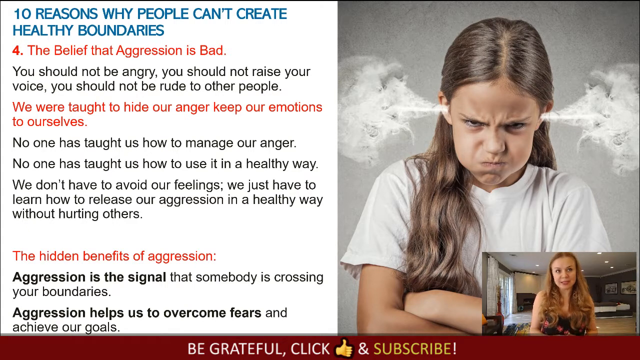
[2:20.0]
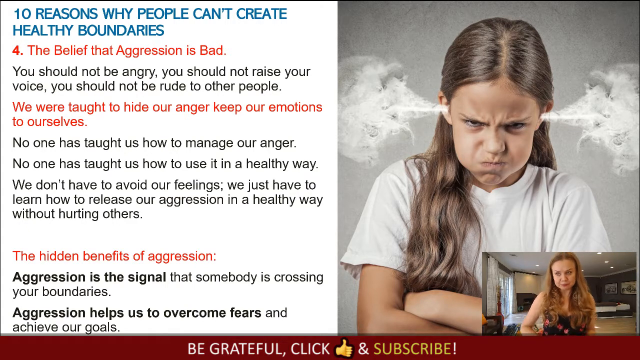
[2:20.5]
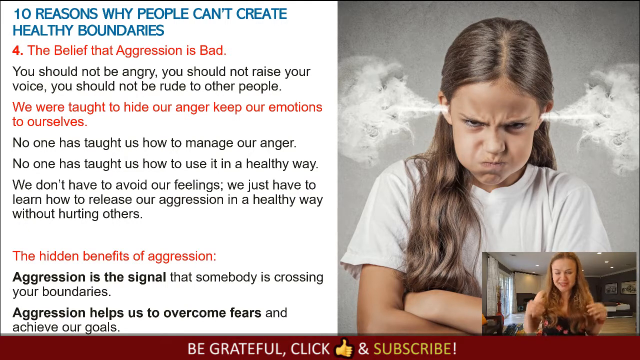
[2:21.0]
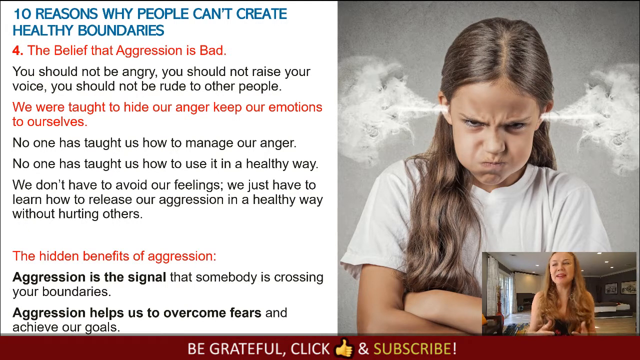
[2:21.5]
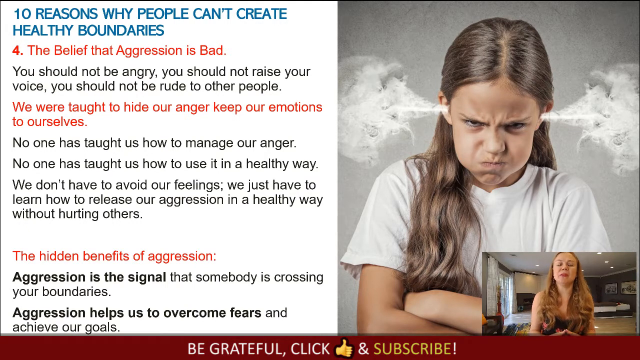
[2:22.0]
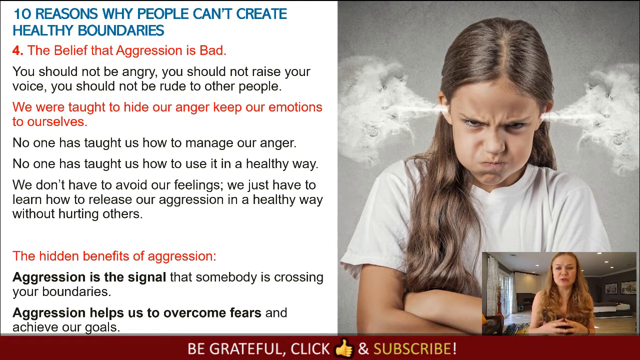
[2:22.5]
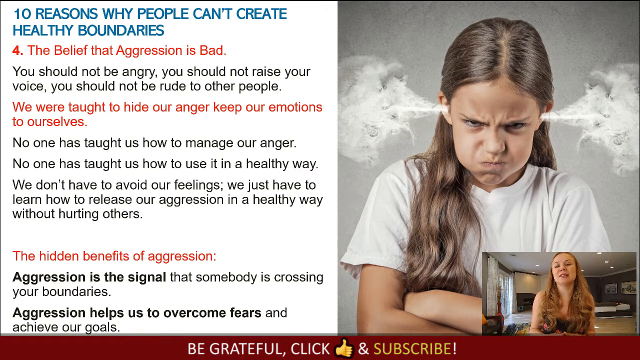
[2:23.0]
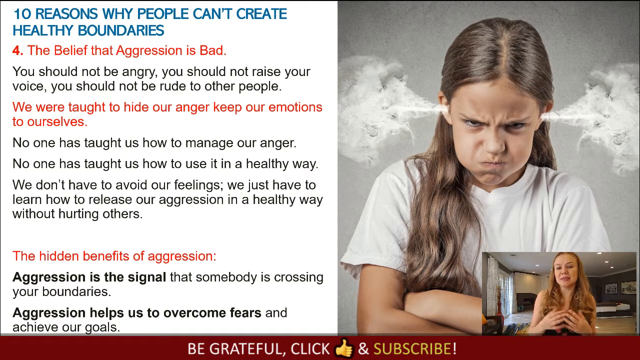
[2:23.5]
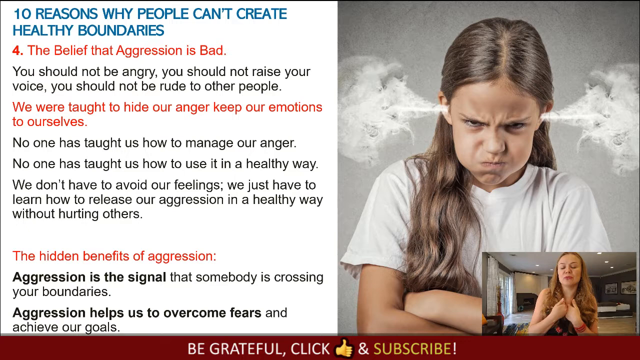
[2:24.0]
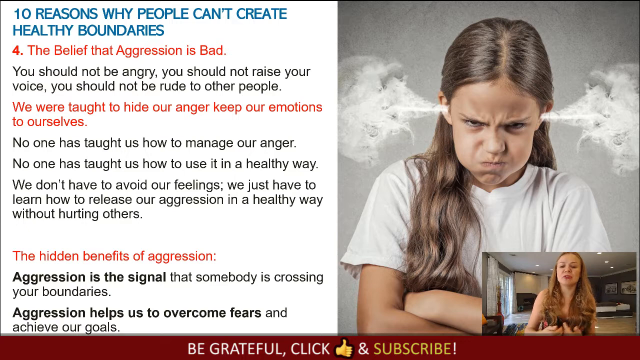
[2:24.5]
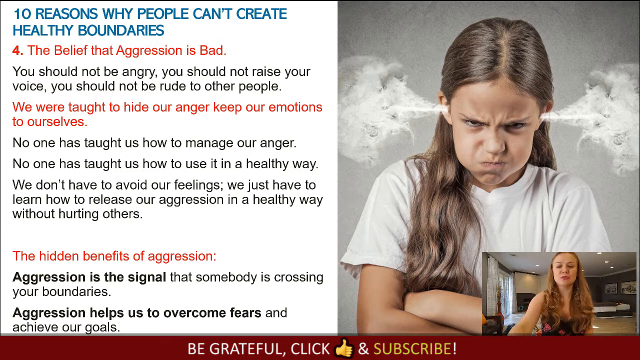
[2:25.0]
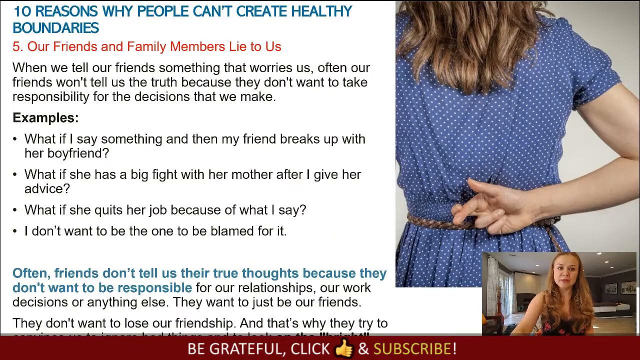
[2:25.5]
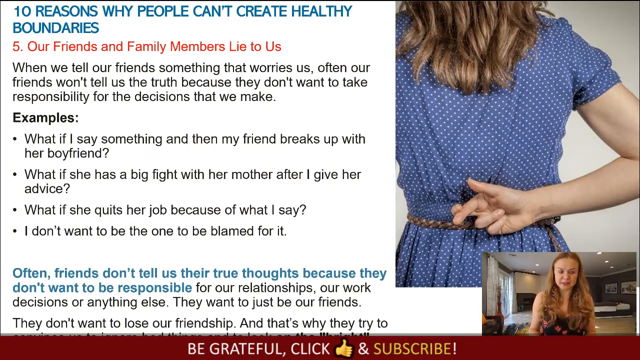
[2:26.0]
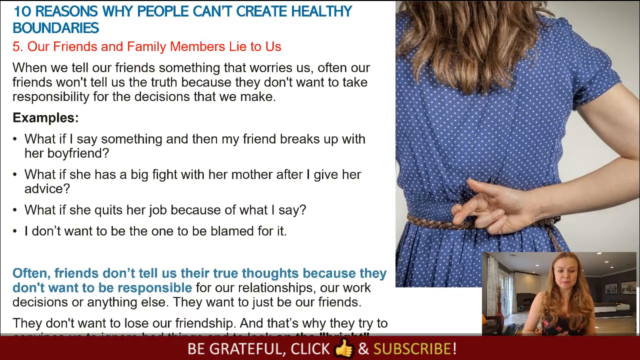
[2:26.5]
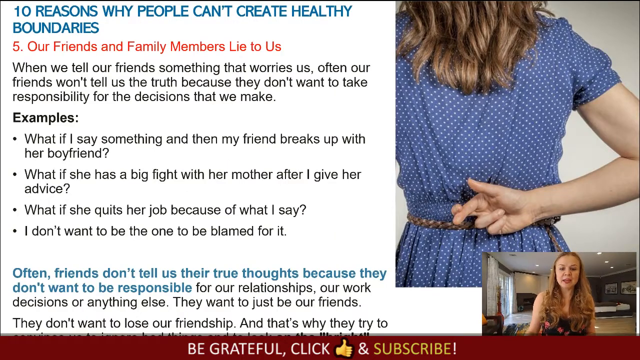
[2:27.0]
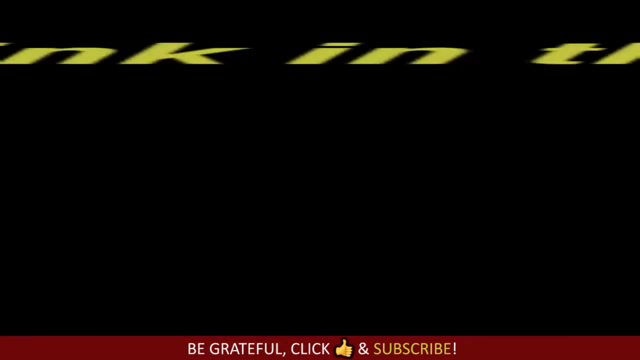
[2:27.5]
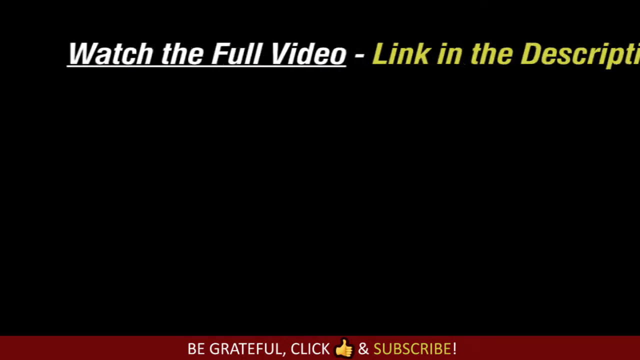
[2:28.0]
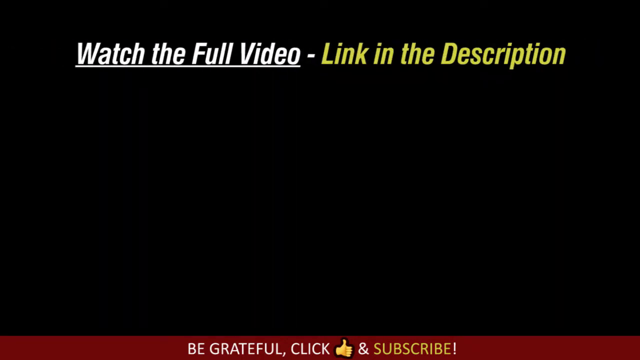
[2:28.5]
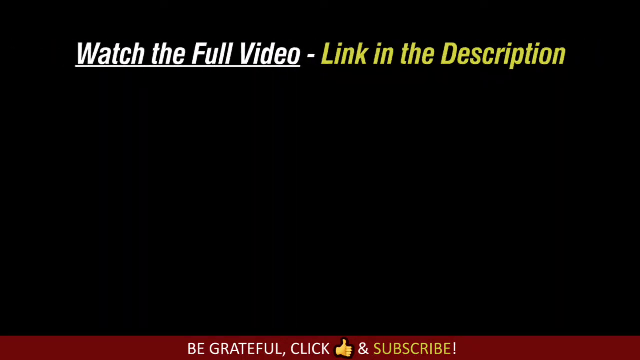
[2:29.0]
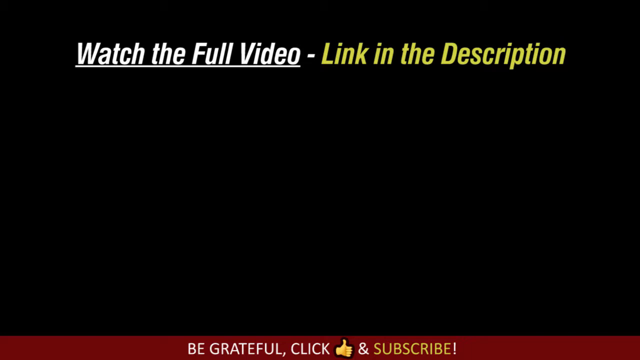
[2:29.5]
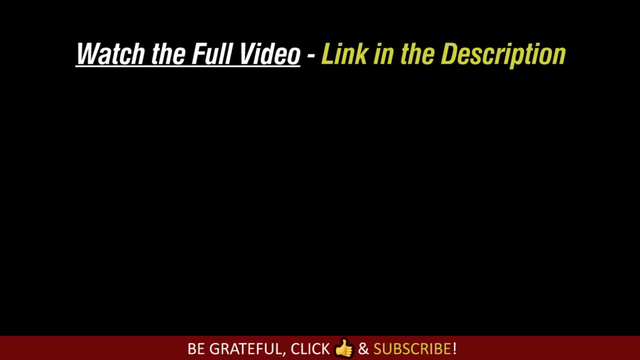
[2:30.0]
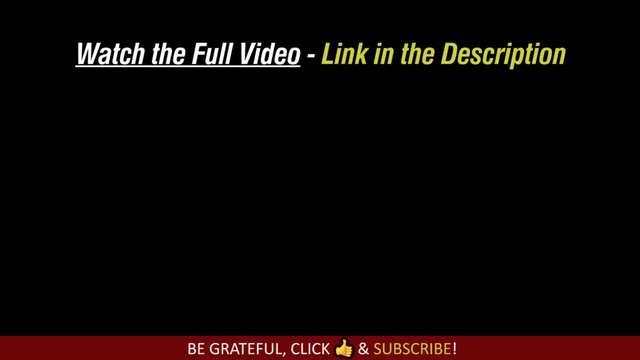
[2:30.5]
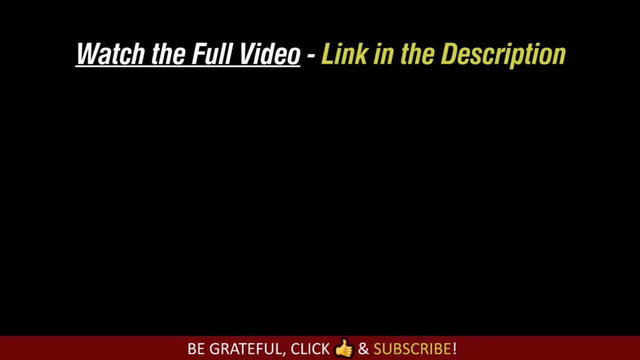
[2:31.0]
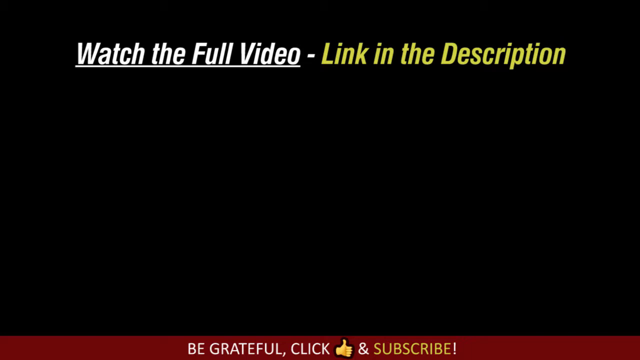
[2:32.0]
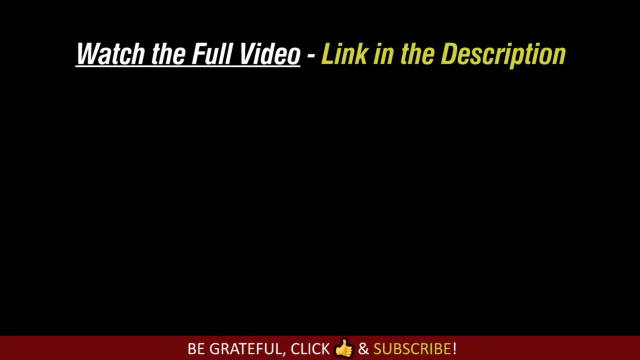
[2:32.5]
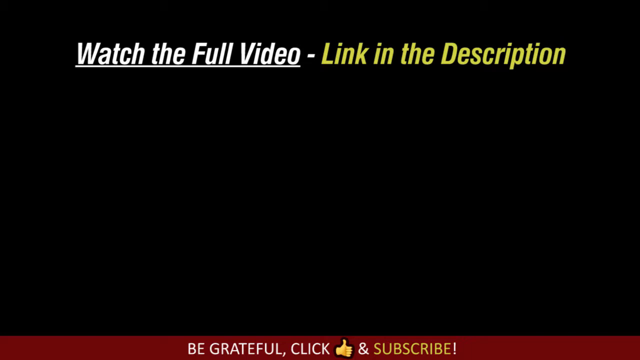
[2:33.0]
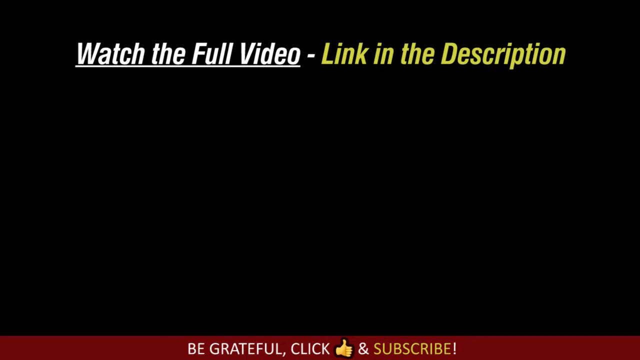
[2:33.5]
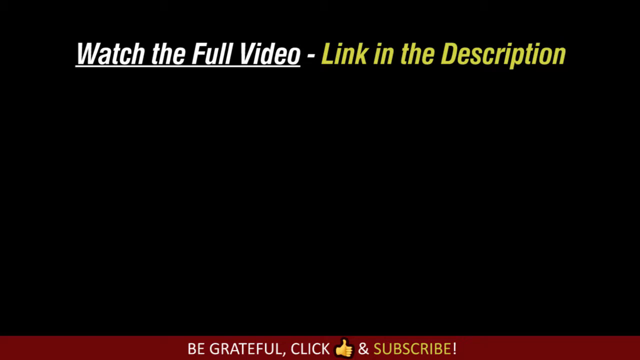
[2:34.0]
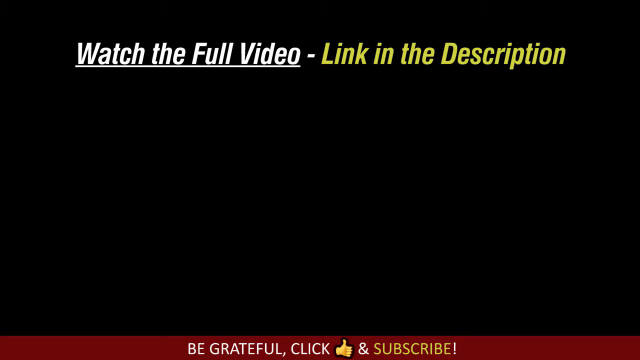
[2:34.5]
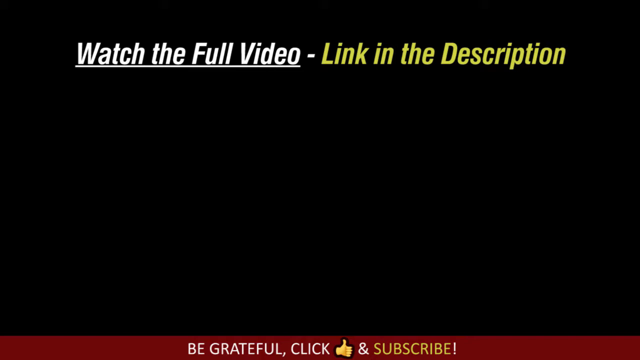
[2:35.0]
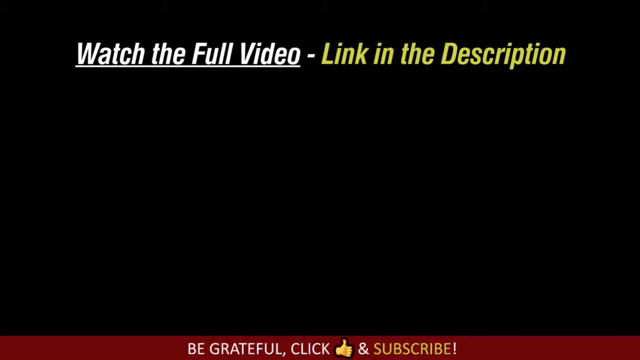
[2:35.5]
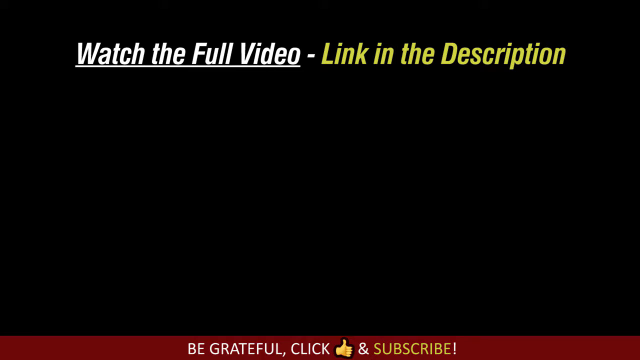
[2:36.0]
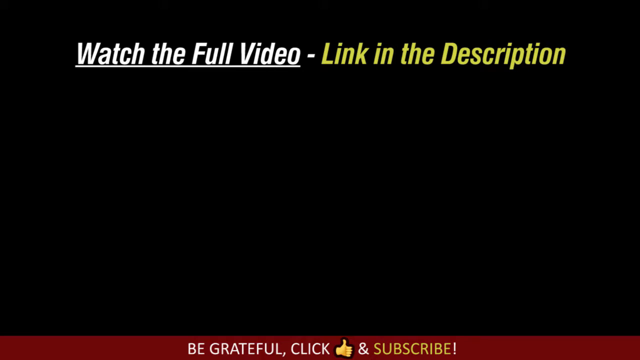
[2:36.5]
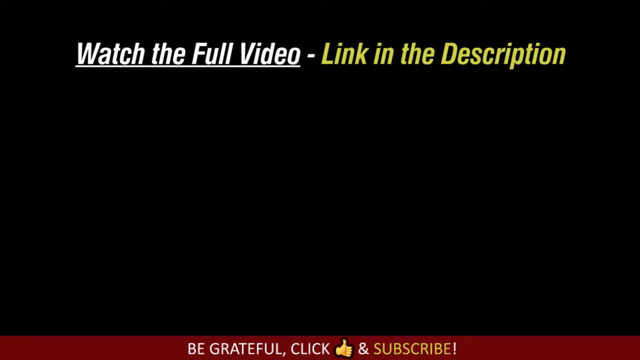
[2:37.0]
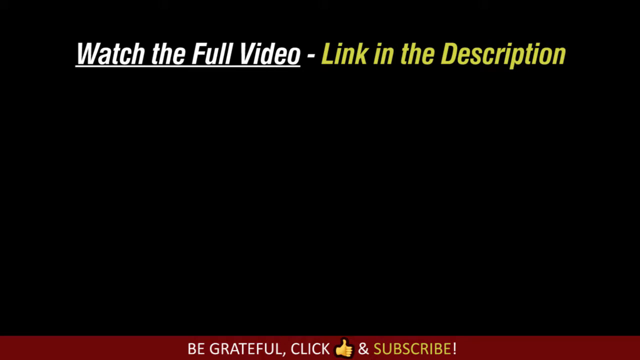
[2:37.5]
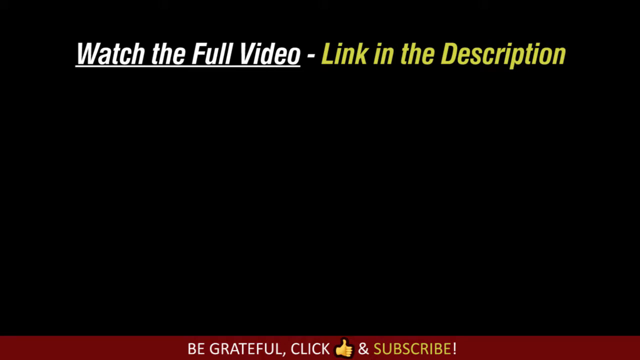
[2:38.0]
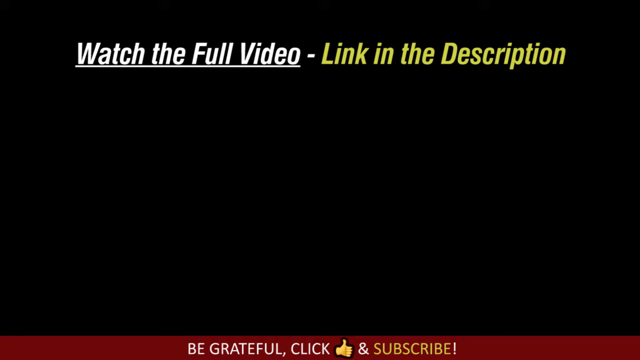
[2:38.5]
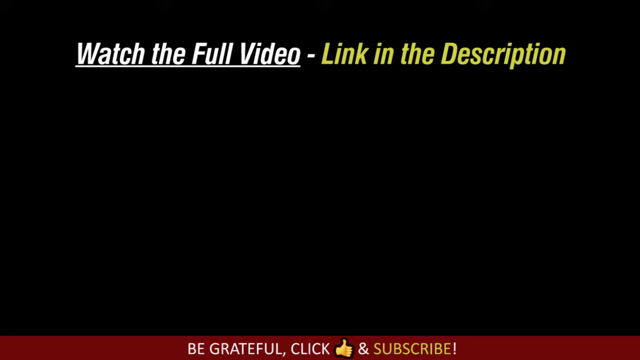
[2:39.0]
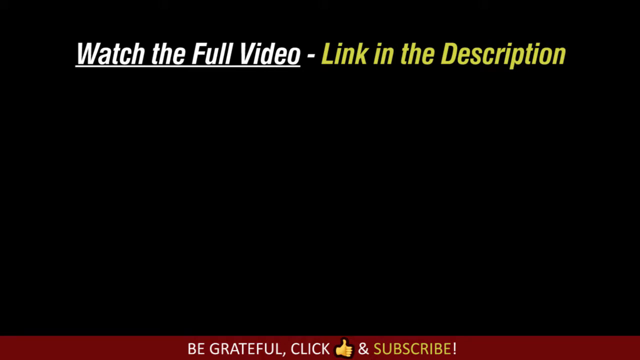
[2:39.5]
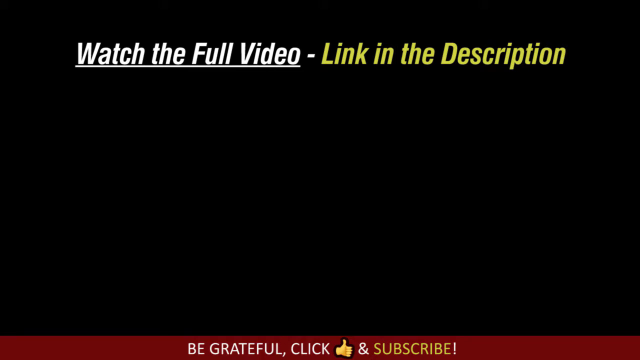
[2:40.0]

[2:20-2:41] The screen is split. On the left is the heading "10 reasons why people can't create healthy boundaries" in blue, followed by three paragraphs with the headings "The belief that aggression is bad", "We were taught to hide our anger, keep our emotions to ourselves", and "The hidden benefits of aggression". On the right is the angry-looking young girl, scowling, with steam coming out of her ears, arms folded, wearing a white t-shirt. In the bottom right-hand corner a woman narrates, with the website address "www.elenasemenek.com" underneath. She gesticulates with her hands in unison with her speech, judging by her mouth and face movements. Sometimes she grimaces as if trying to find the right words; her eyes move upwards and sometimes towards the camera. She makes air quotes with her hands and sometimes leans her upper body forward. She makes a gesture that suggests she is saying "no", as if talking about someone putting up some kind of boundary. Text appears at the bottom, "Be grateful click and subscribe", in white and yellow. Then, briefly, an image appears on the right-hand side of the back of a woman in a blue dress with white spots, holding her arm behind her back with her fingers crossed, as if making a false promise or saying something untrue. That image disappears and the text "watch the full video - link in the description at the top" appears.